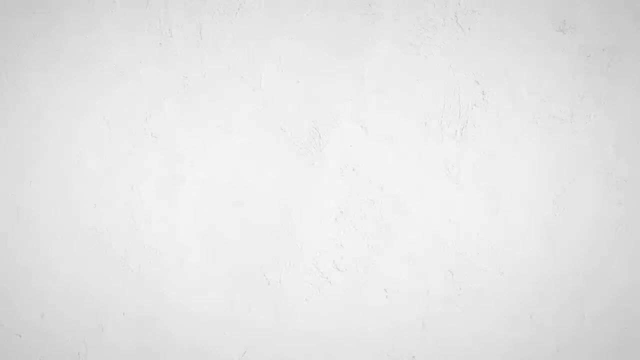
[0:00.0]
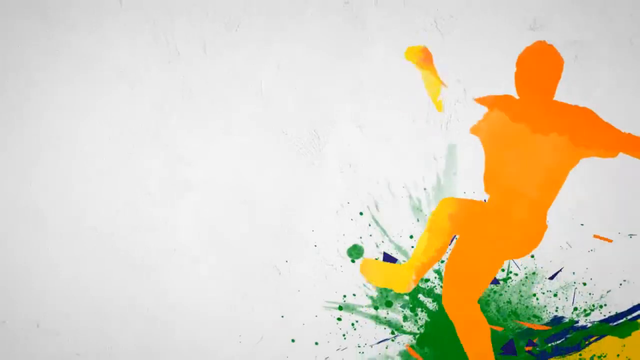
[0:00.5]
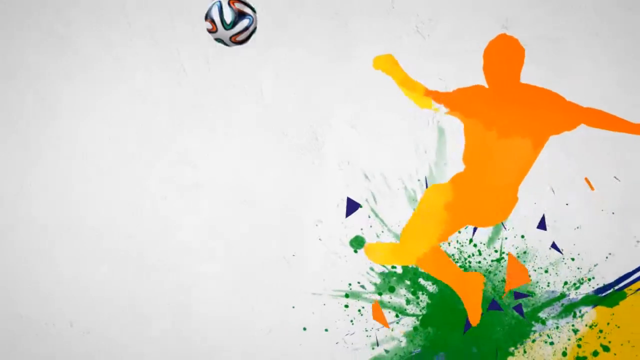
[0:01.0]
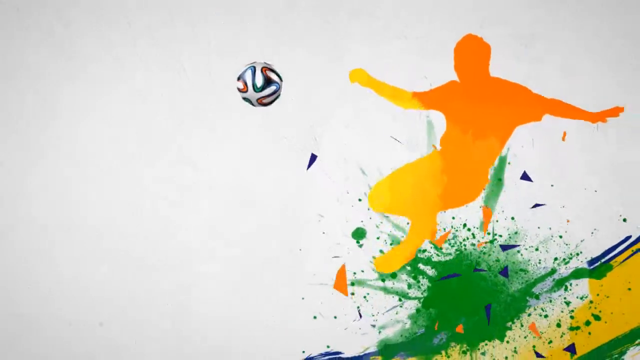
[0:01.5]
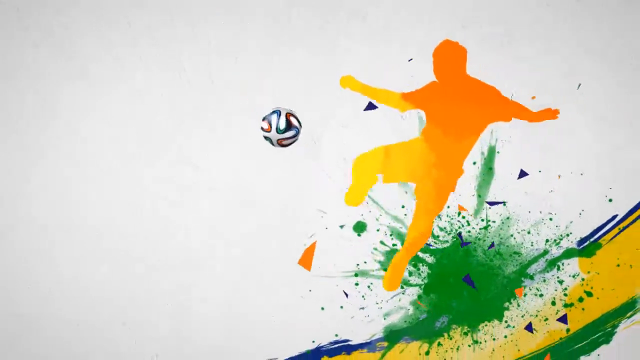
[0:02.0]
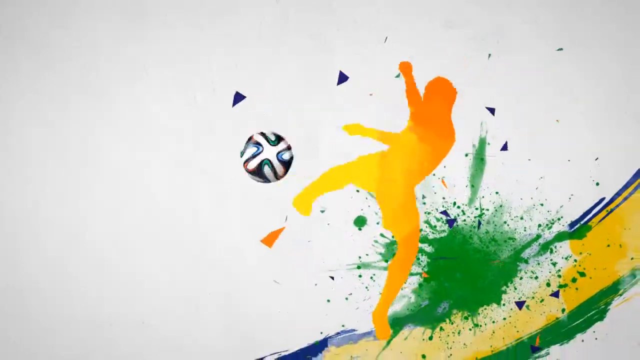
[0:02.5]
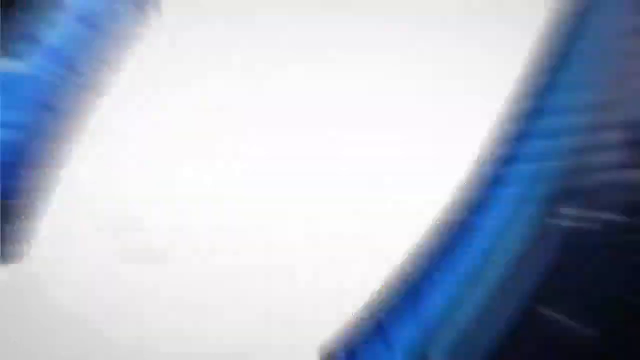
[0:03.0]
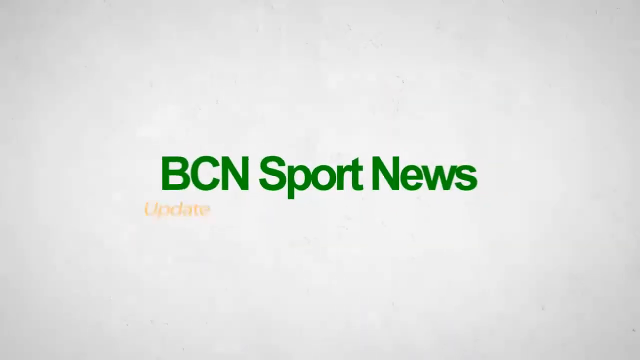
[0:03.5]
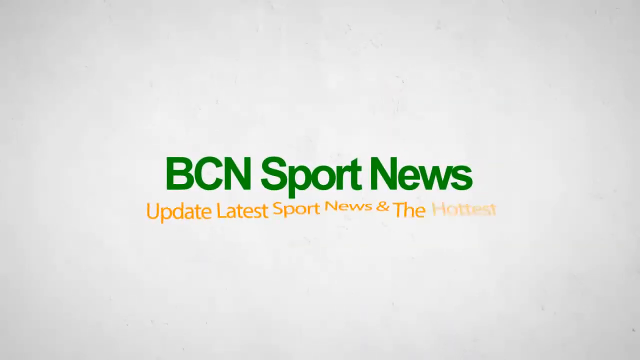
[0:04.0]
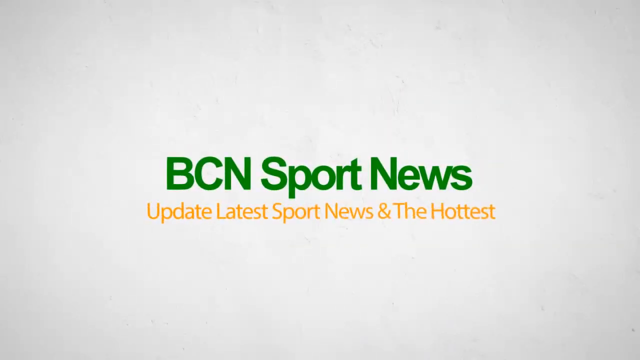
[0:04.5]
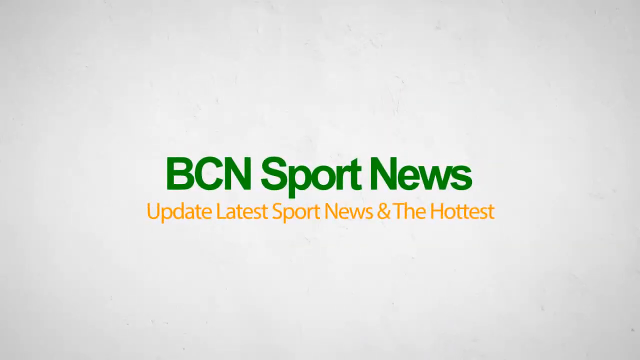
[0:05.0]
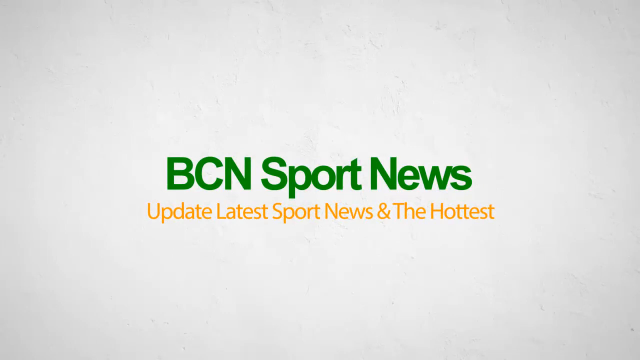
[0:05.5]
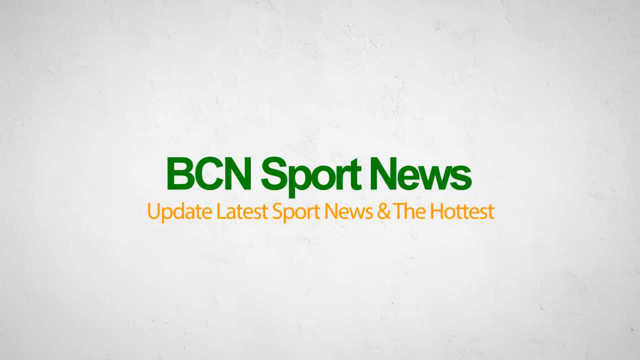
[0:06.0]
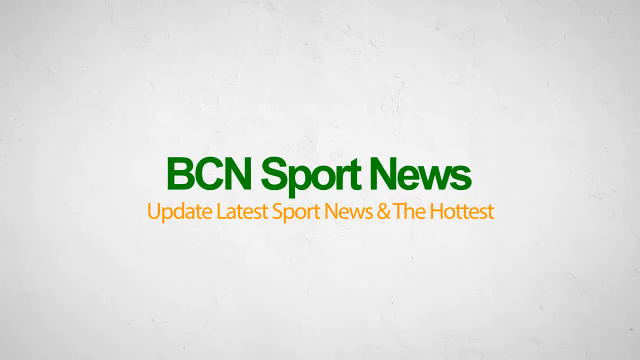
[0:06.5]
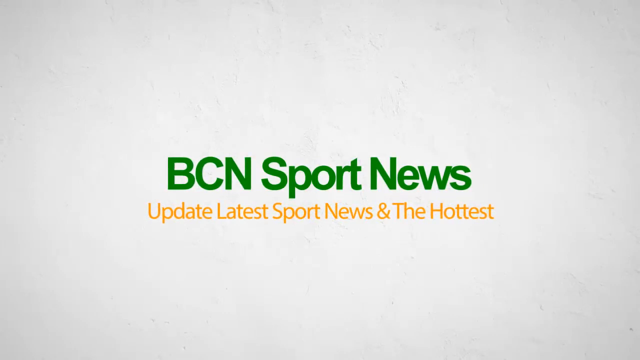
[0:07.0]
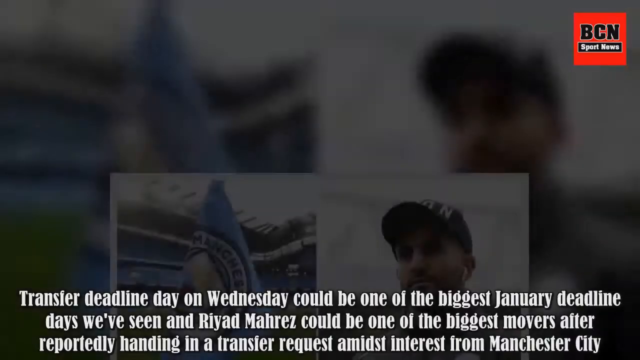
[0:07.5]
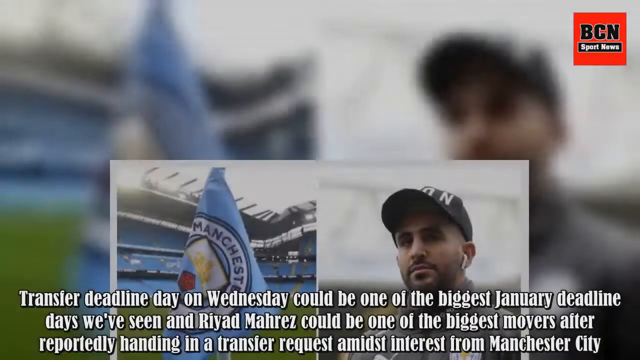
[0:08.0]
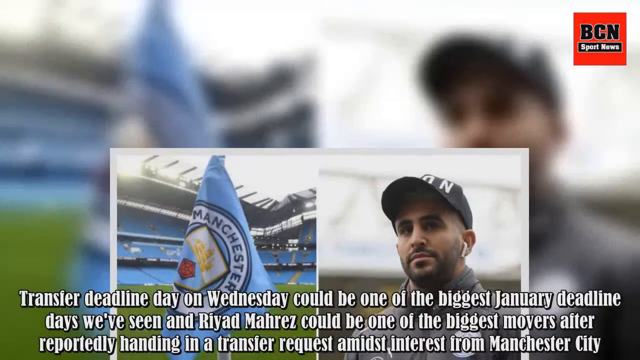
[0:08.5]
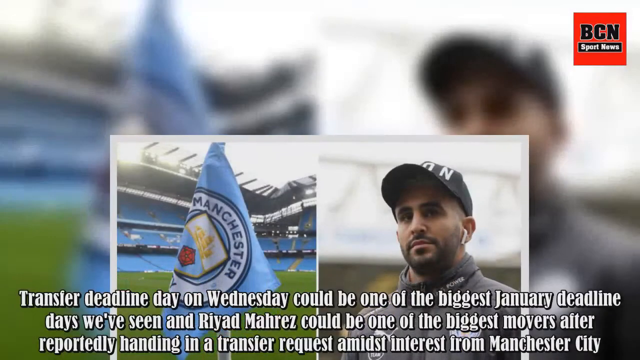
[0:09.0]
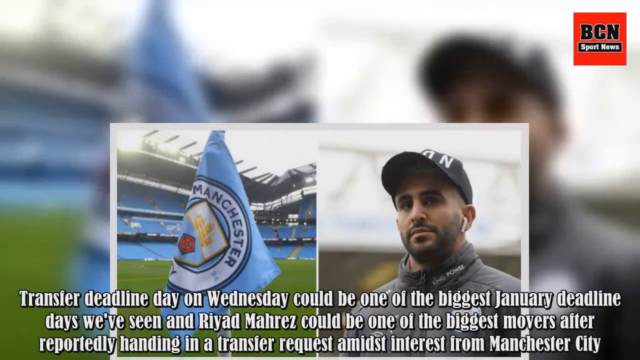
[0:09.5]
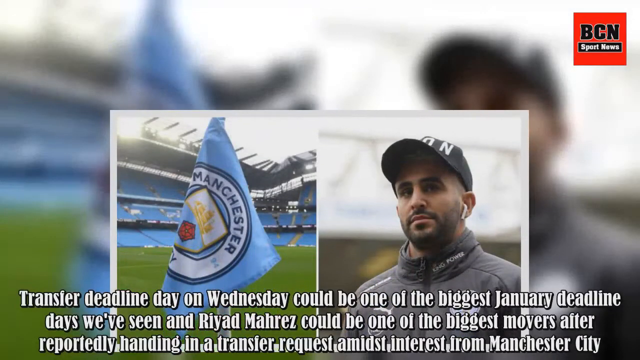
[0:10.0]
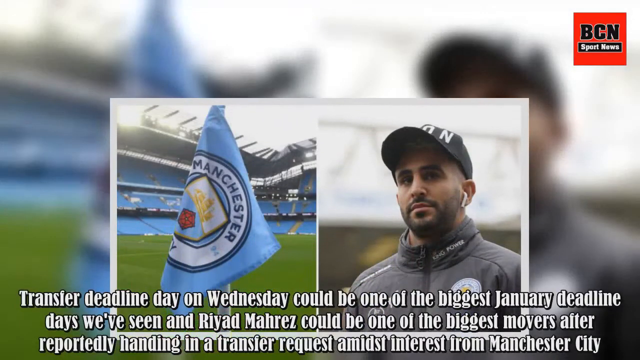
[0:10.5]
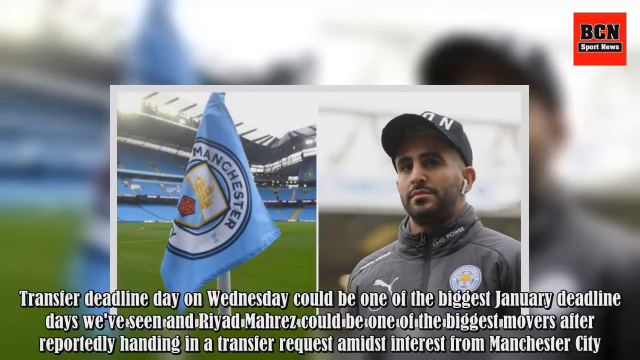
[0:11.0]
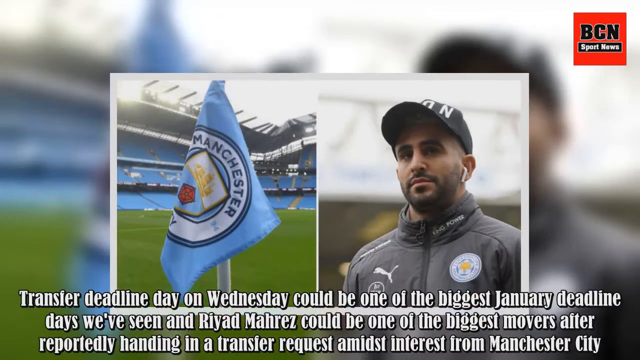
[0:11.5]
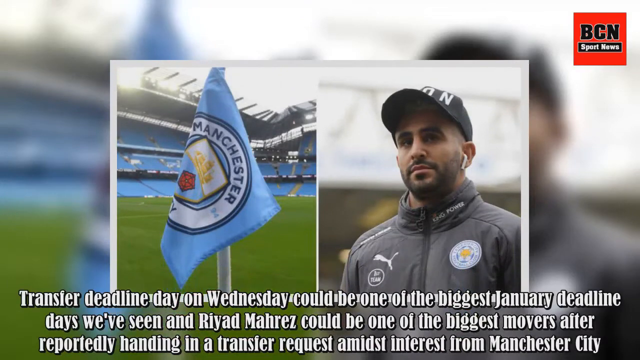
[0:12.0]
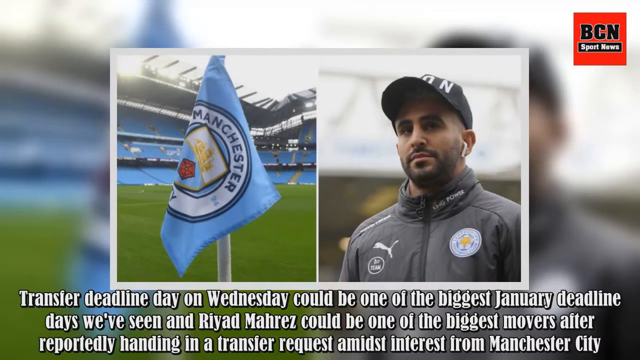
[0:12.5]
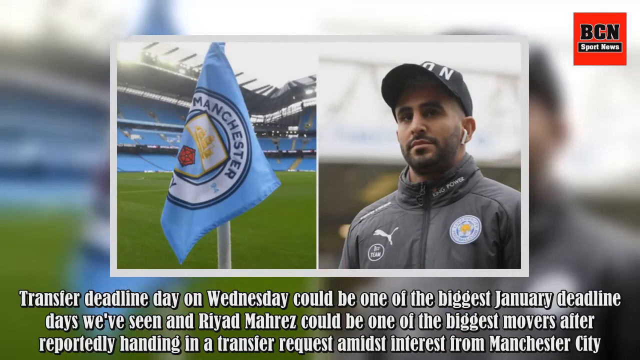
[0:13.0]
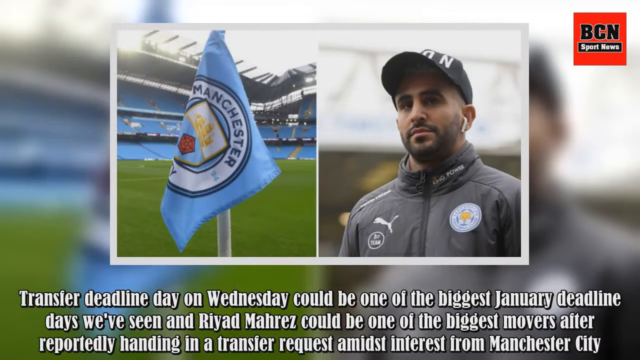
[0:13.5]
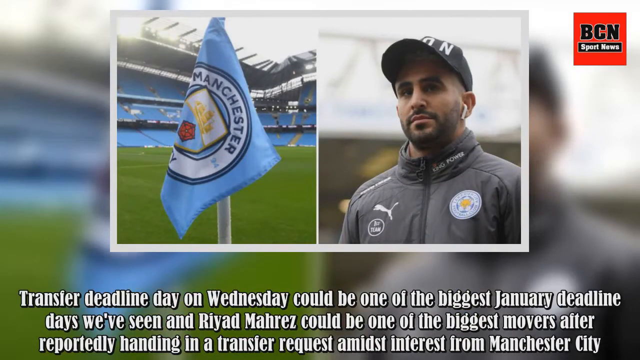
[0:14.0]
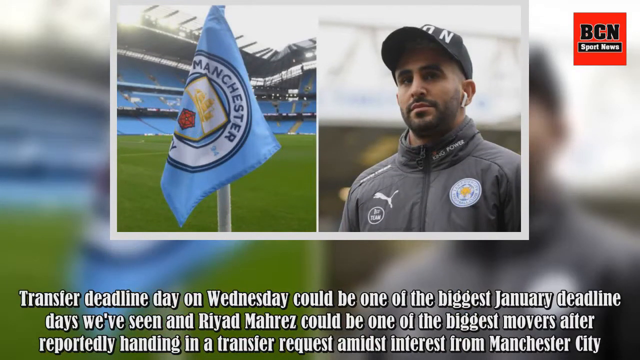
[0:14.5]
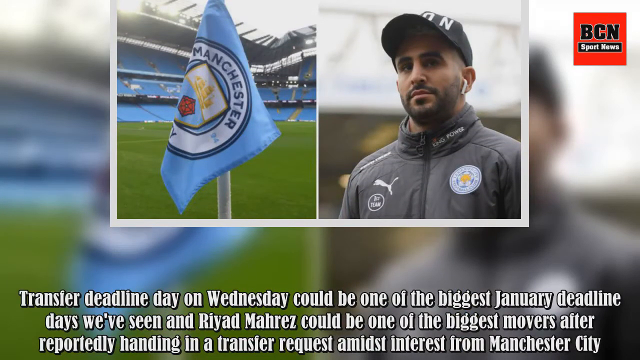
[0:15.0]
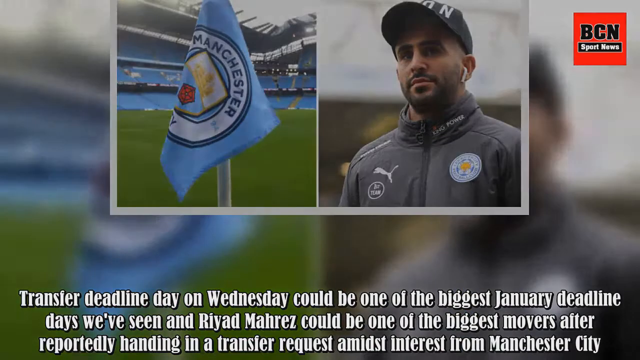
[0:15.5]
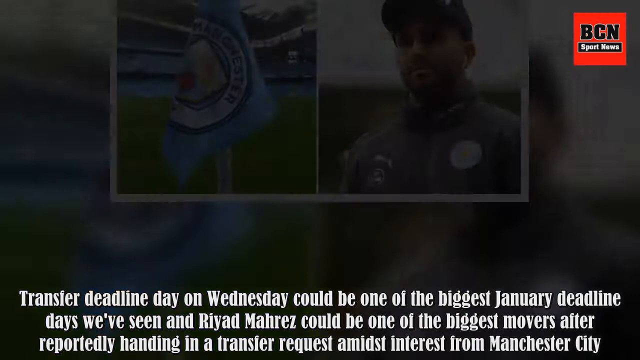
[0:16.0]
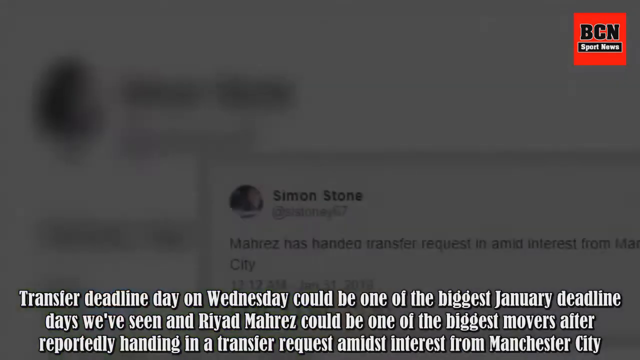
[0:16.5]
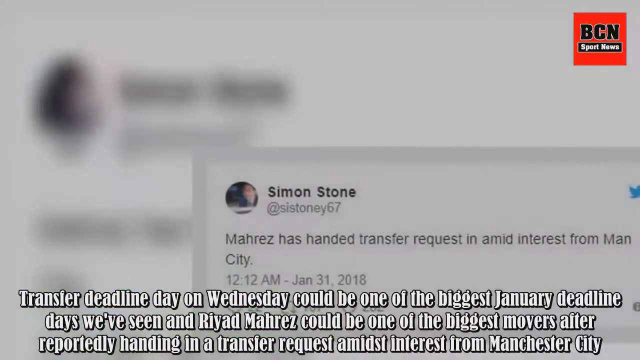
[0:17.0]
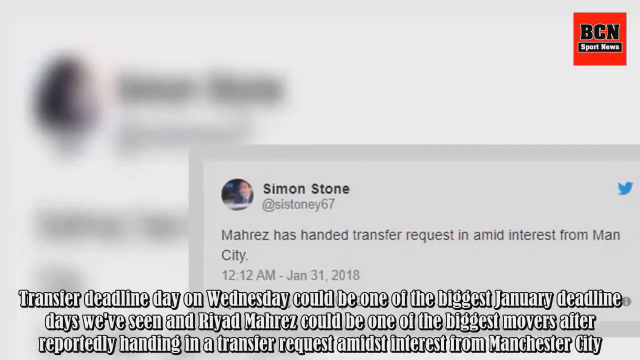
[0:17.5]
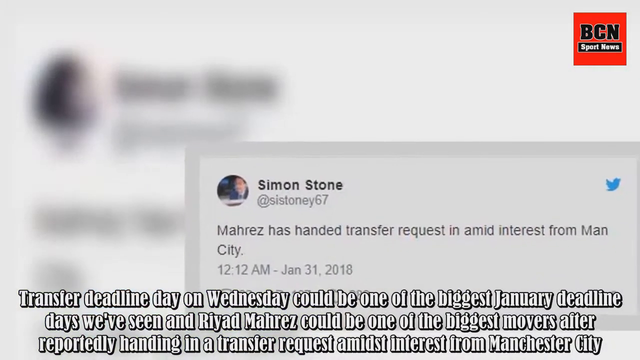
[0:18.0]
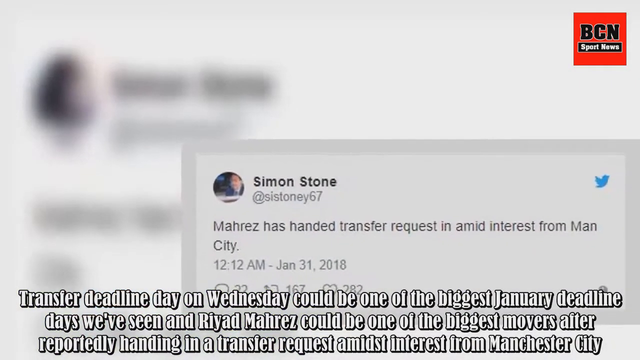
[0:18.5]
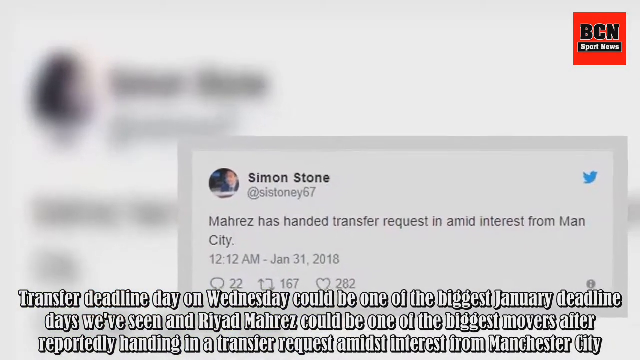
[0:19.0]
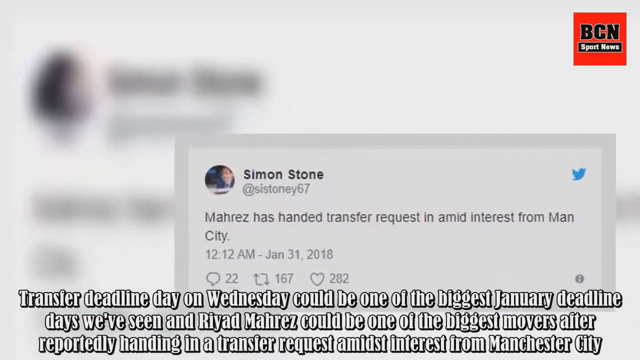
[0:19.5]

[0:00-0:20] Text about the transfer deadline on Wednesday possibly being one of the biggest January deadline days appears on screen. A cartoon outline of an orange soccer player kicks a ball against a completely white background. In the top right of the screen, "BCN Sports News" is written in black. A number of tweets are shown, and various graphics play out in the background, including some green splashes.